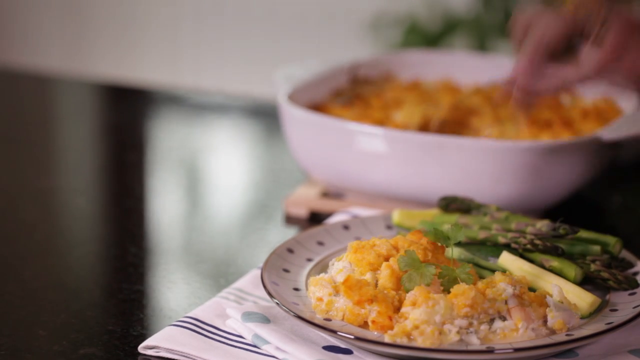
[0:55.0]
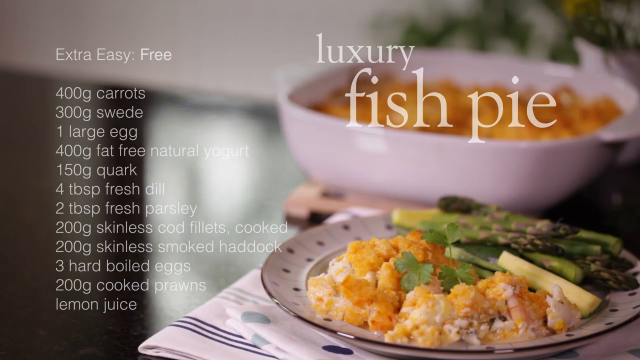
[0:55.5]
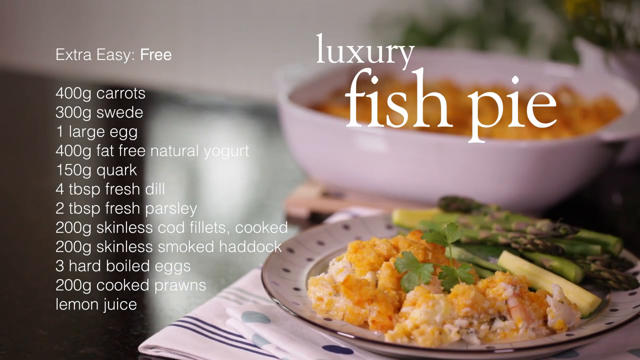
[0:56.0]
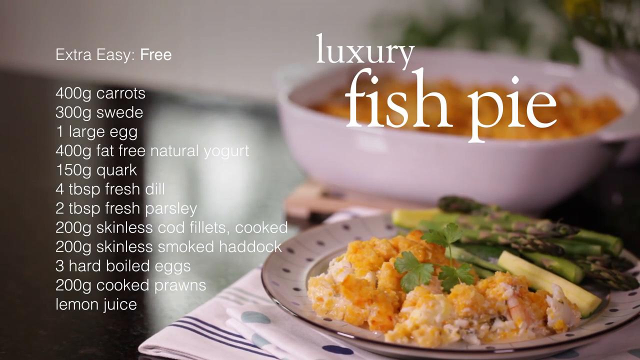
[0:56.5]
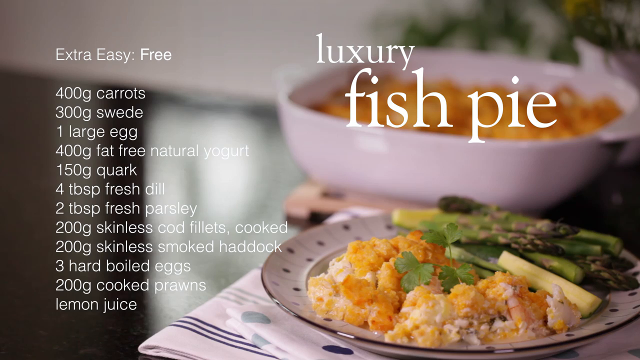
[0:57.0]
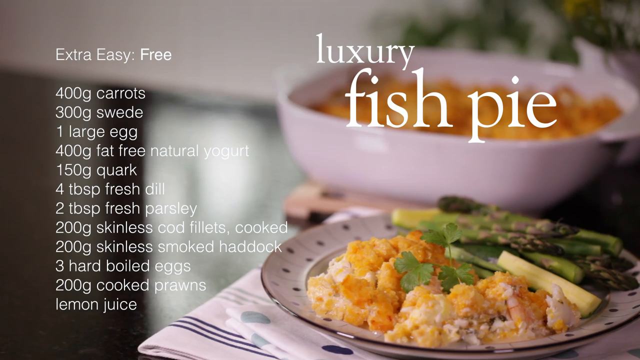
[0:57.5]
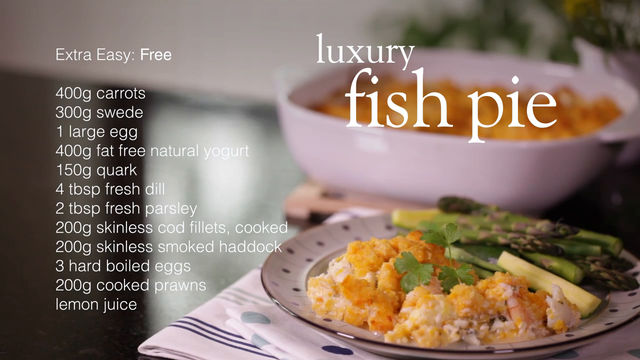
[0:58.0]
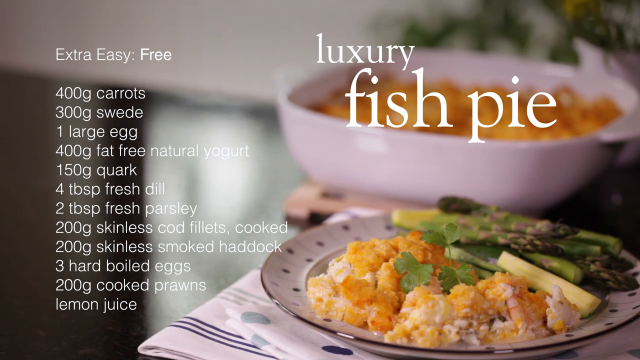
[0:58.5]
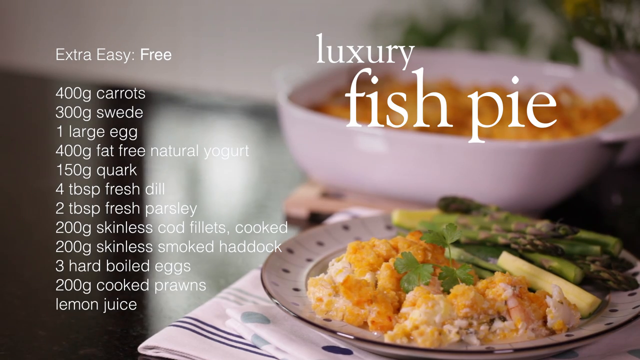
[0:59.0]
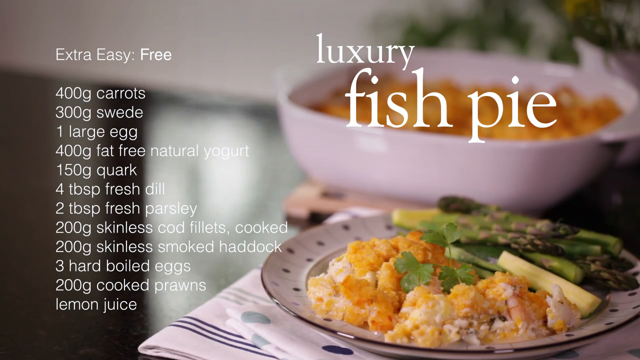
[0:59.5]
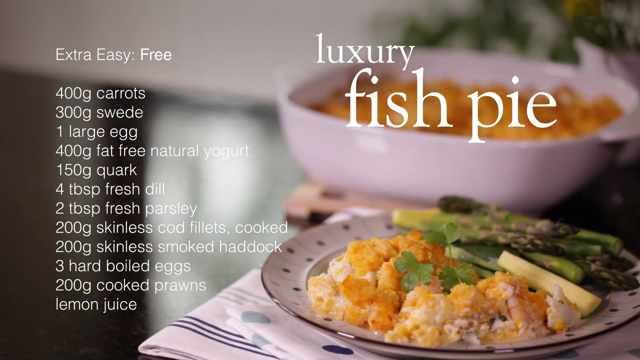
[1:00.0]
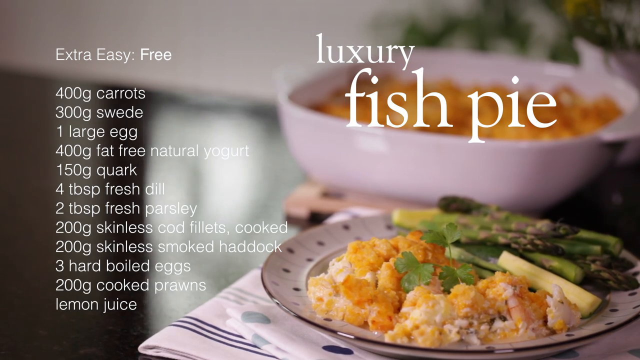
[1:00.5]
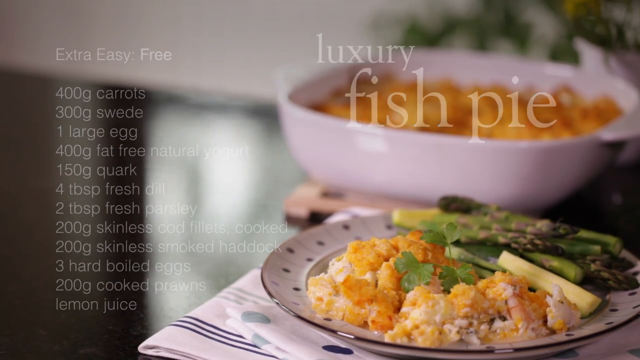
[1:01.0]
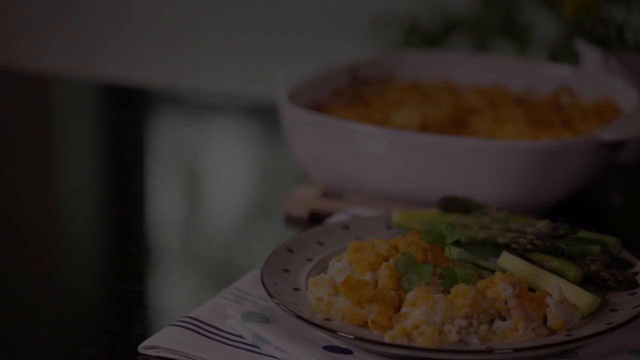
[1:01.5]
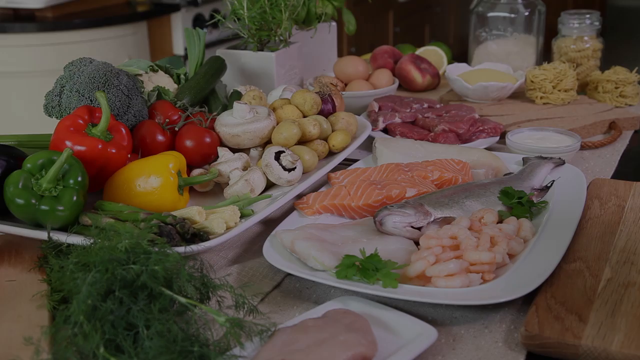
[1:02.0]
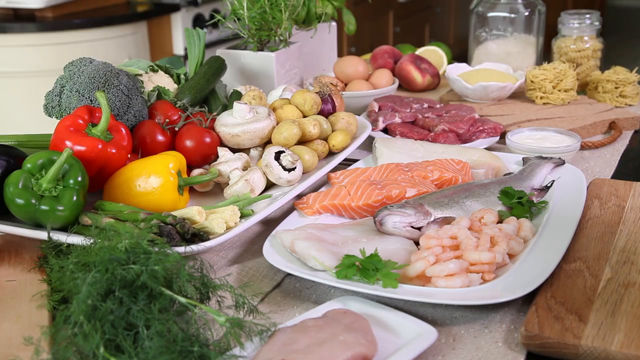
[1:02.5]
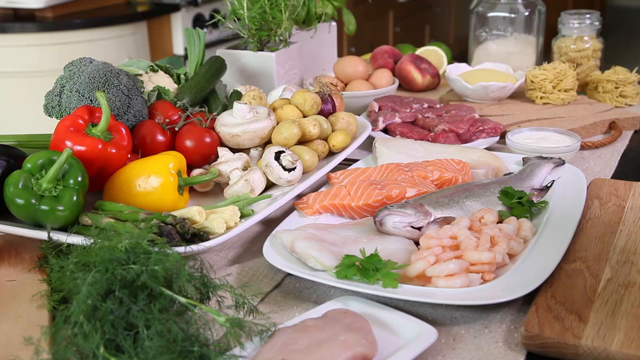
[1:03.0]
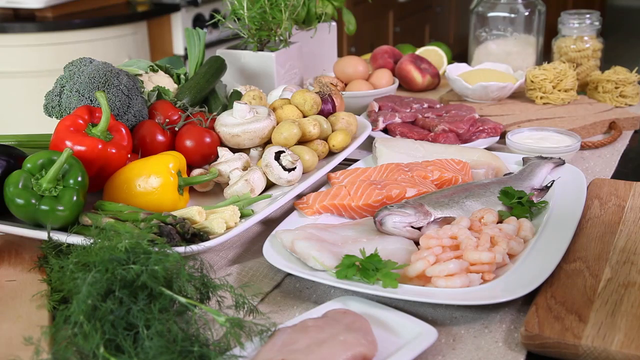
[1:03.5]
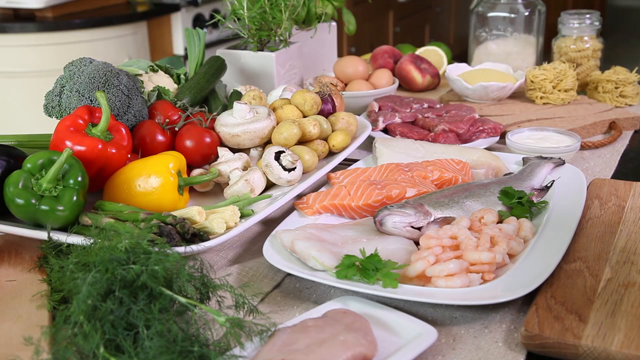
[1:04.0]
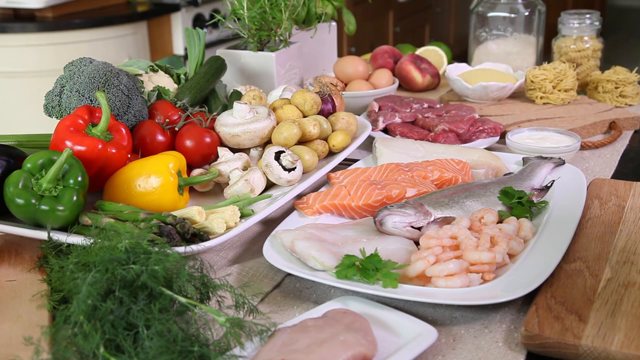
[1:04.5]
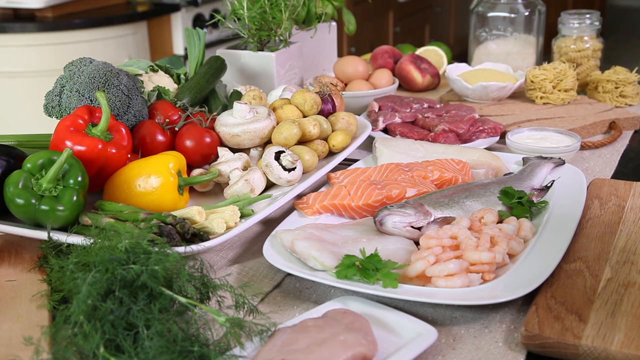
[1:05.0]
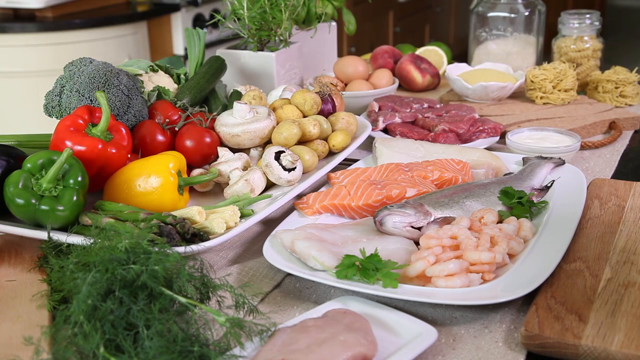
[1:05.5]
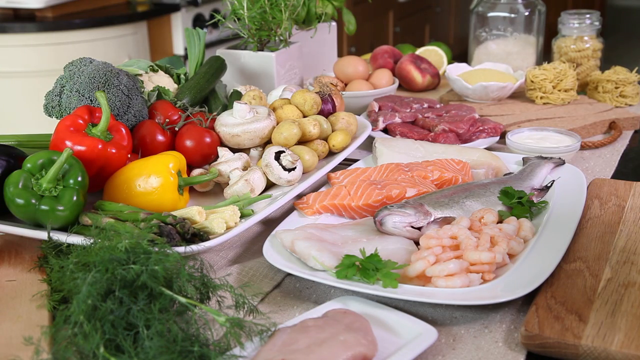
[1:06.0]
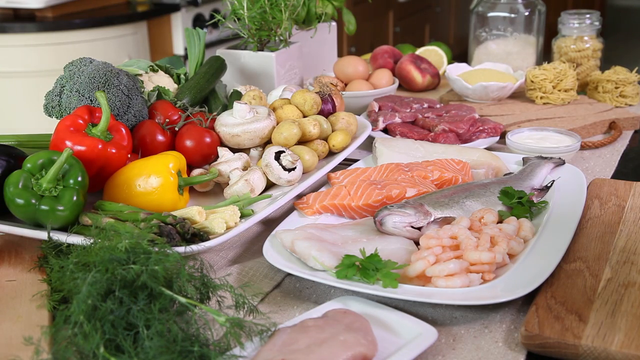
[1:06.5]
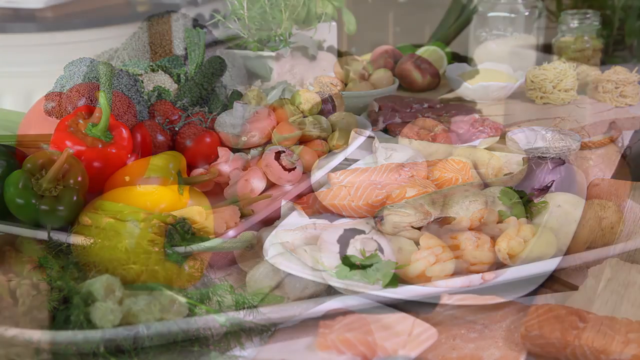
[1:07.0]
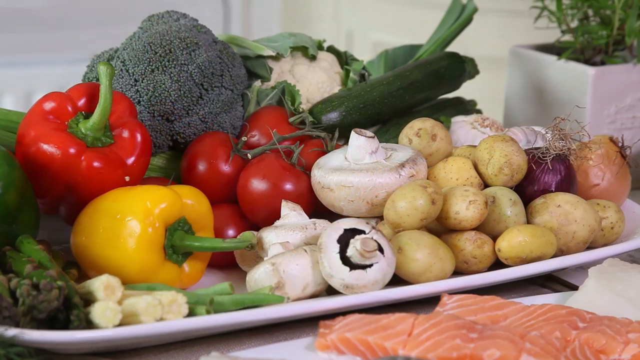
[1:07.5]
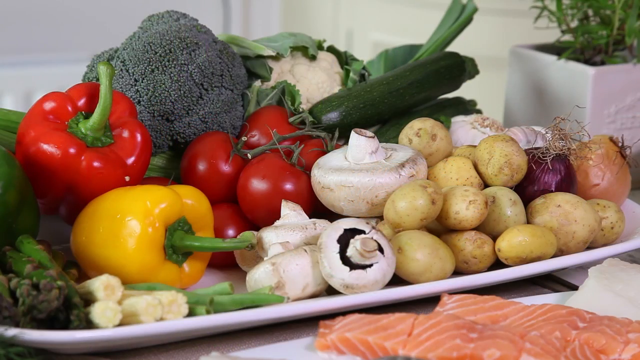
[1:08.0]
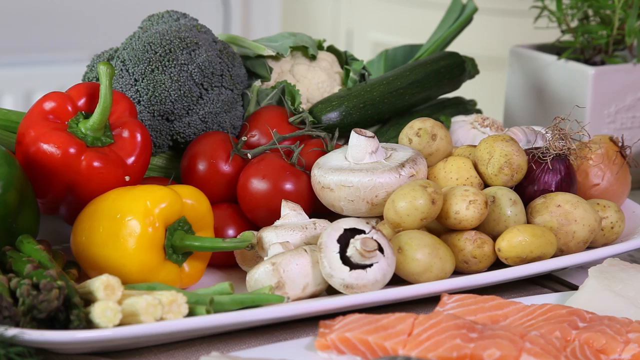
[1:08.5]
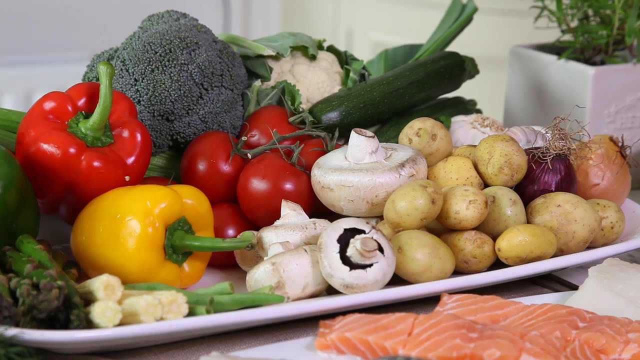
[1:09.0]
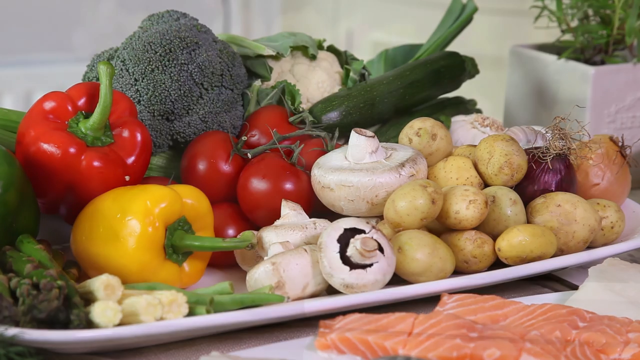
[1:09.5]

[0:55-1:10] An overview shows a prepared dish of food sitting completed in a casserole dish, with a portion plated next to it in a very clean-looking display: an orange and white, sort of creamy food with some green vegetables laying on the plate next to it. The plate is a white ceramic plate with some black markings, sitting on a white striped napkin. Text over the top of the video says "luxury fish pie" and gives what looks like a recipe or list of ingredients, with quantities in grams such as "400 grams of carrots" and "one large egg", going through the items used to create the dish. The video scrolls past this and moves on to imagery of ingredients laid out: different types of fish, some shrimp, vegetables, peppers, tomatoes, mushrooms and potatoes, all displayed across a table, a cutting board and some casserole dishes.